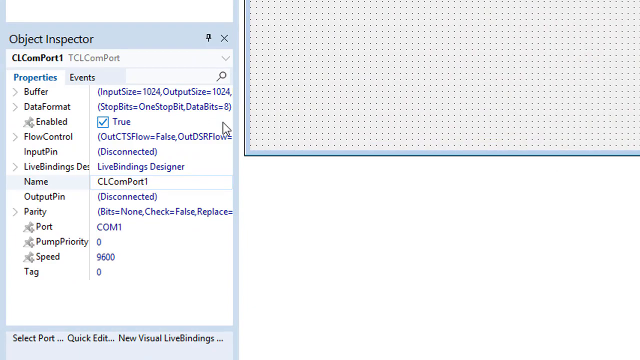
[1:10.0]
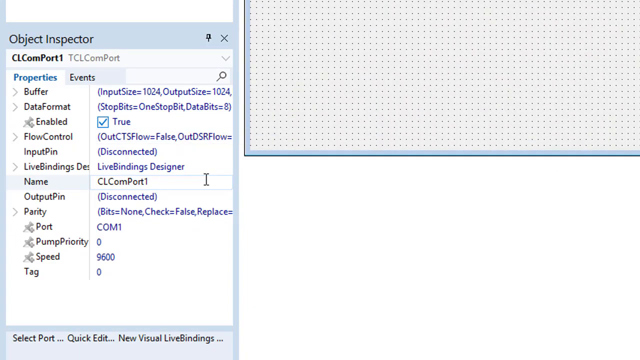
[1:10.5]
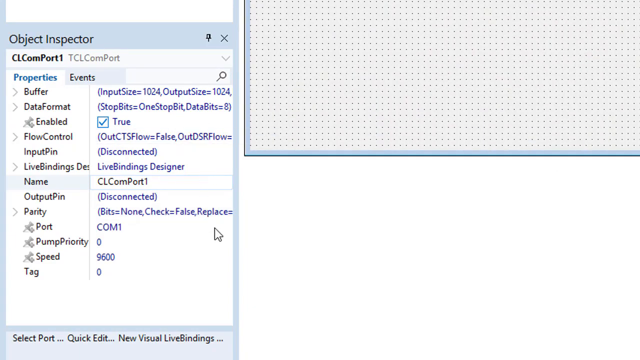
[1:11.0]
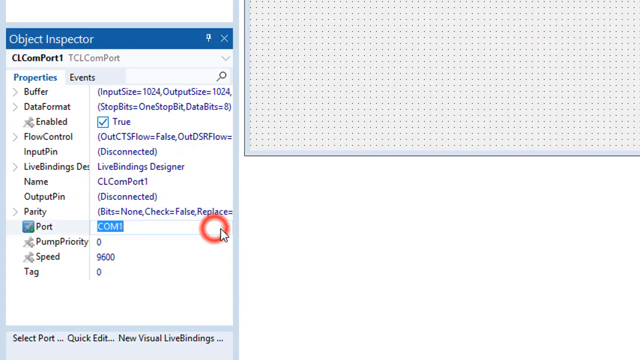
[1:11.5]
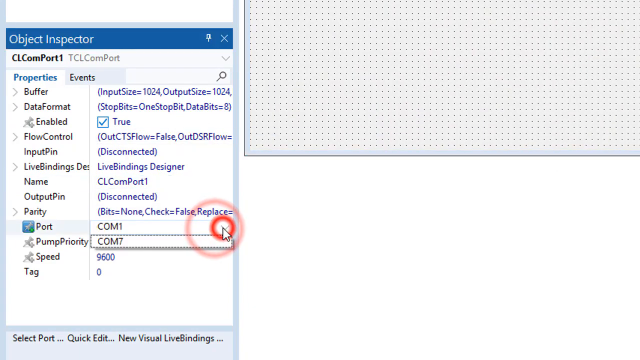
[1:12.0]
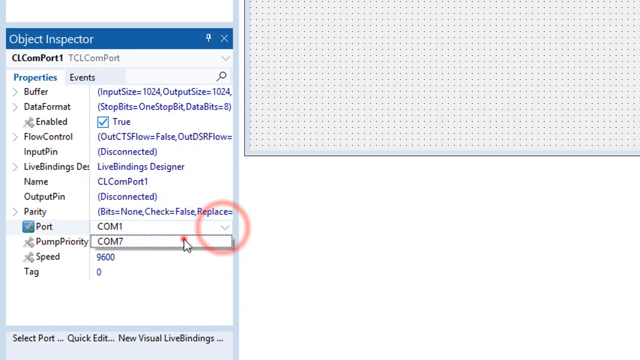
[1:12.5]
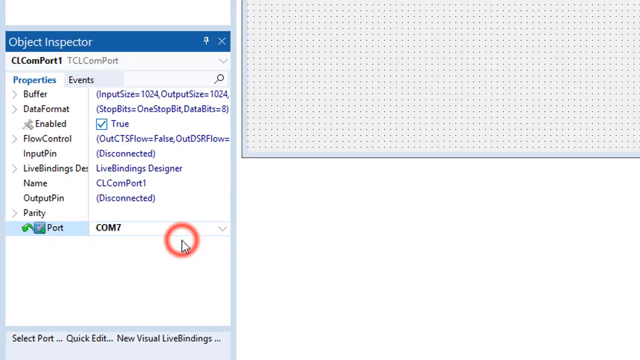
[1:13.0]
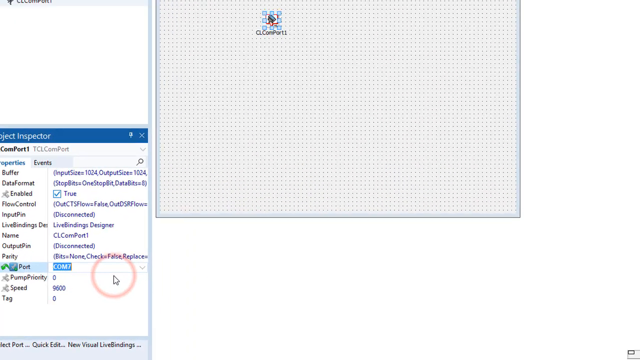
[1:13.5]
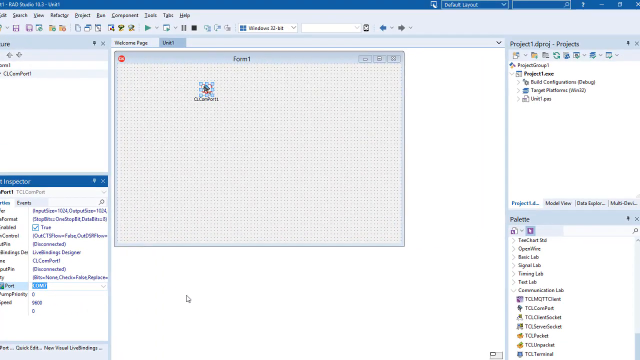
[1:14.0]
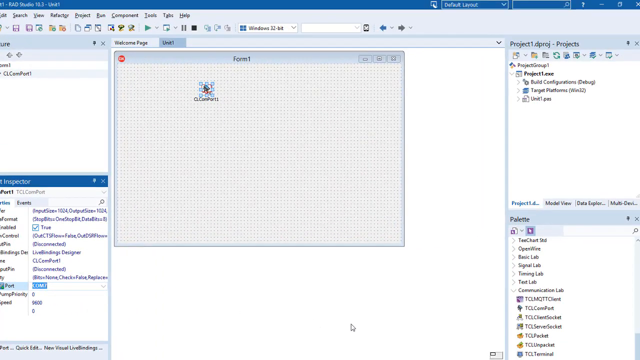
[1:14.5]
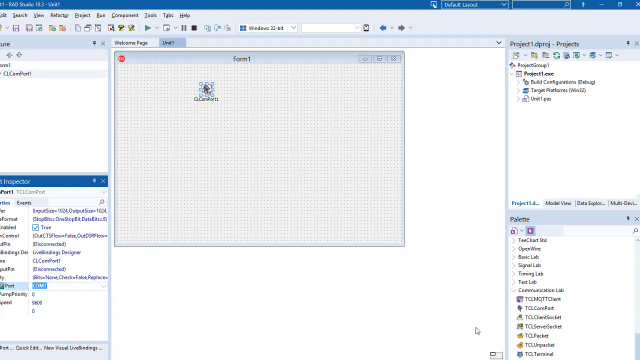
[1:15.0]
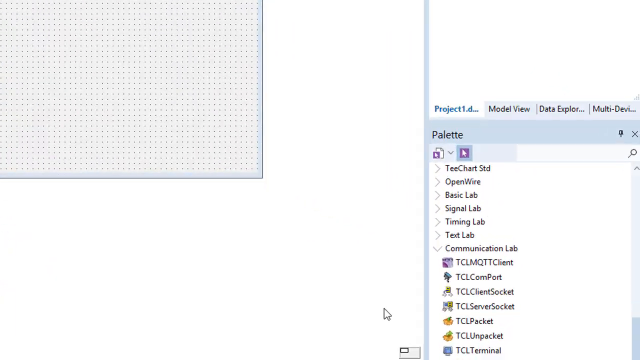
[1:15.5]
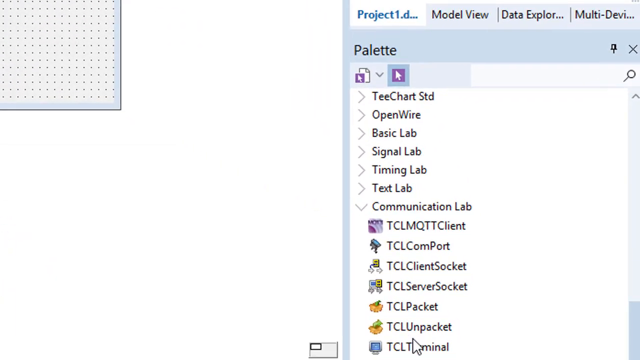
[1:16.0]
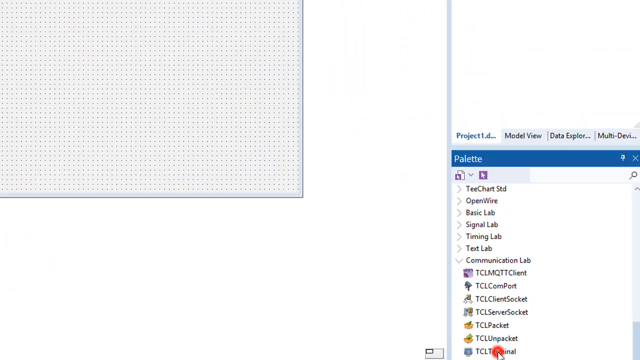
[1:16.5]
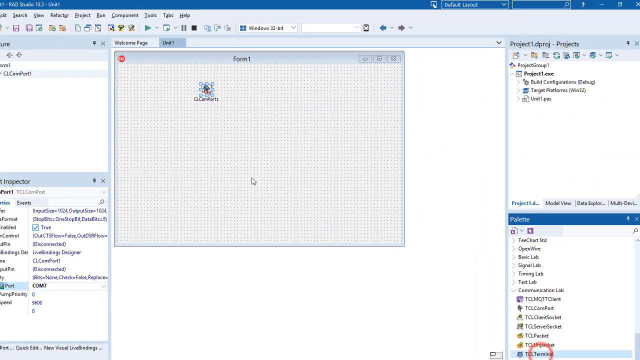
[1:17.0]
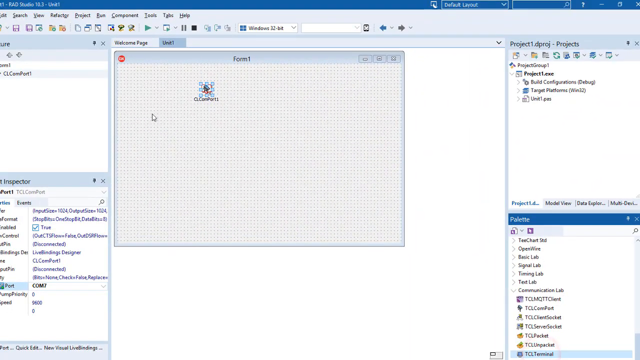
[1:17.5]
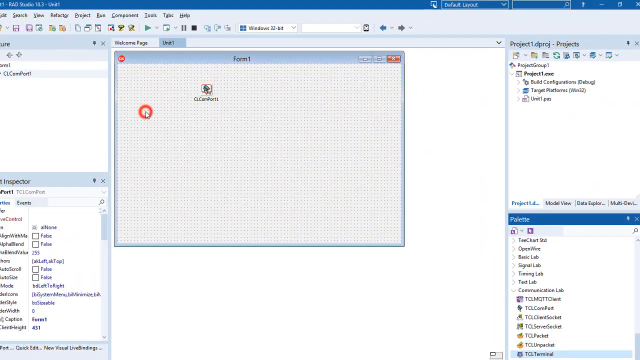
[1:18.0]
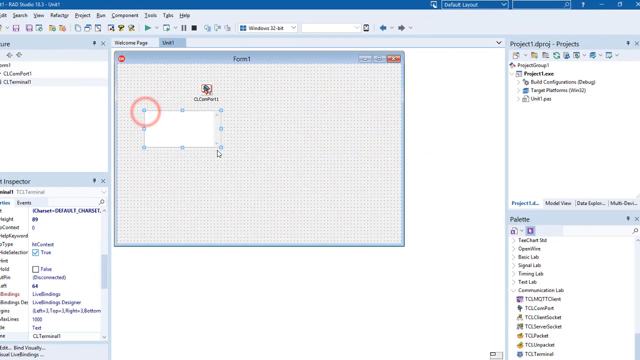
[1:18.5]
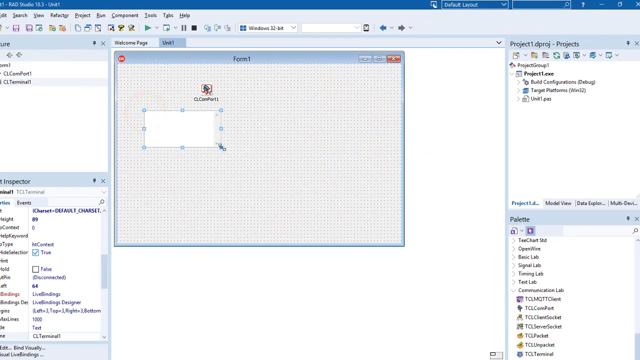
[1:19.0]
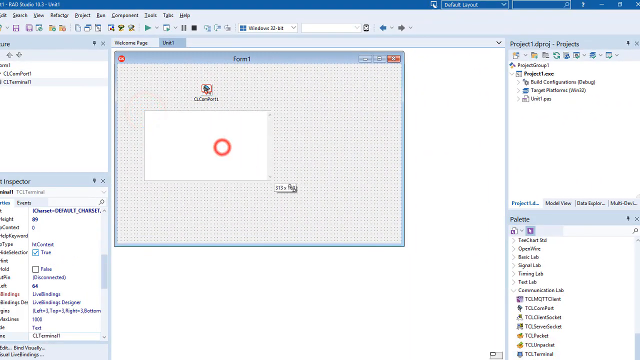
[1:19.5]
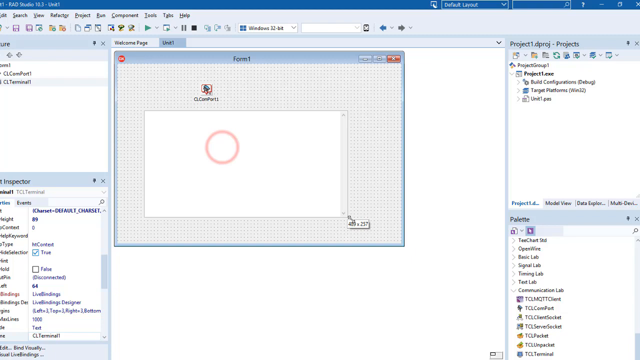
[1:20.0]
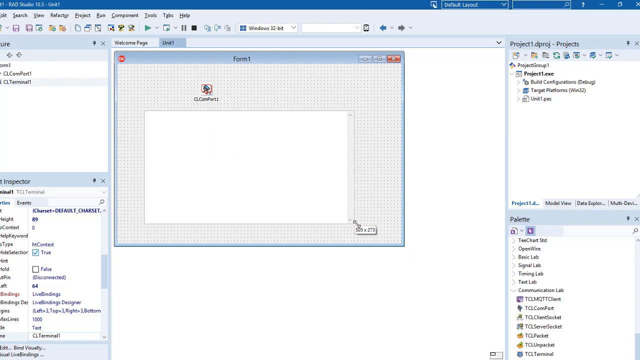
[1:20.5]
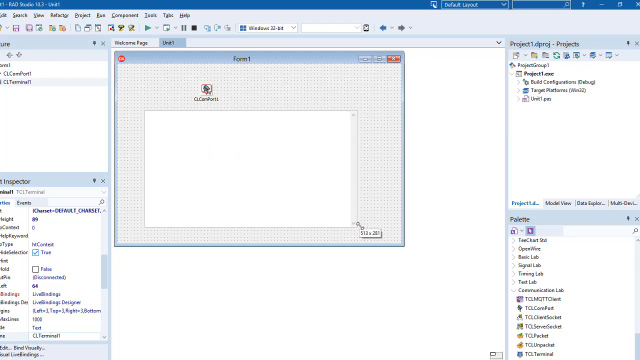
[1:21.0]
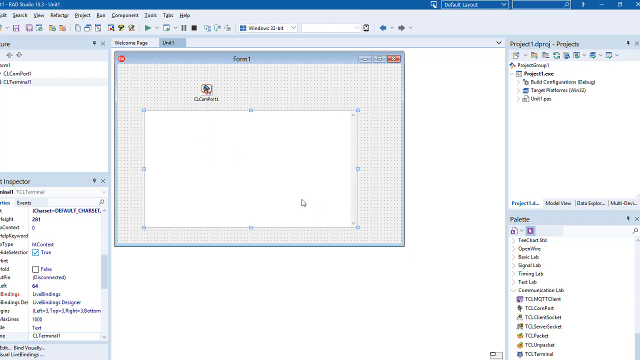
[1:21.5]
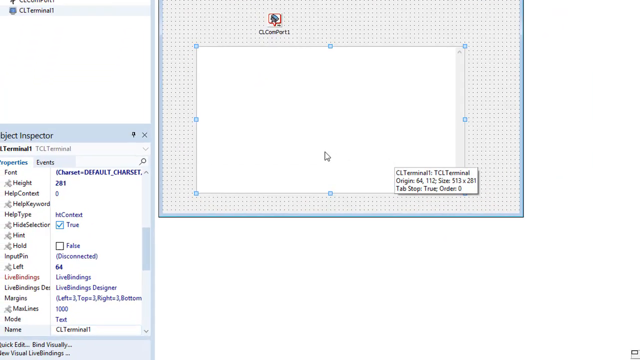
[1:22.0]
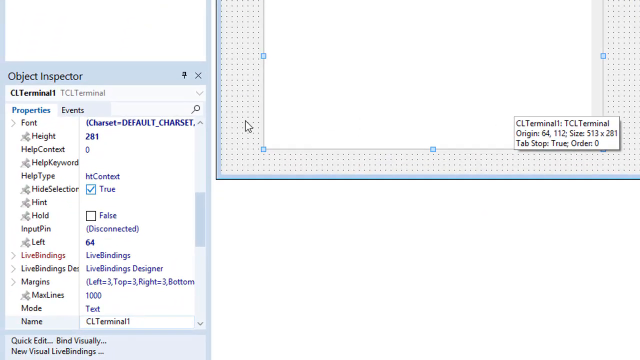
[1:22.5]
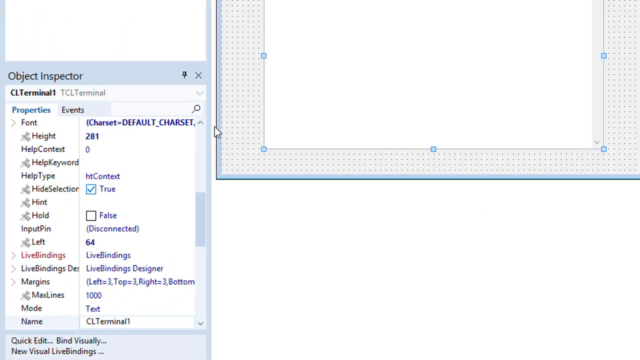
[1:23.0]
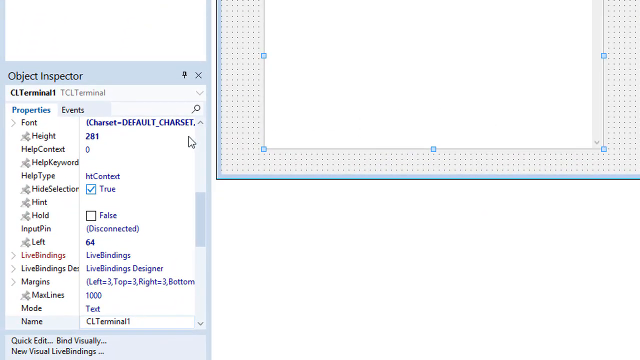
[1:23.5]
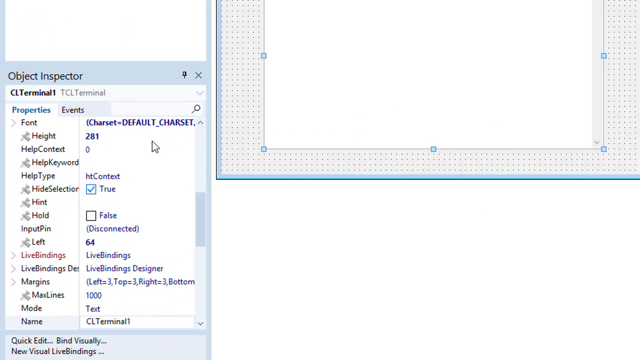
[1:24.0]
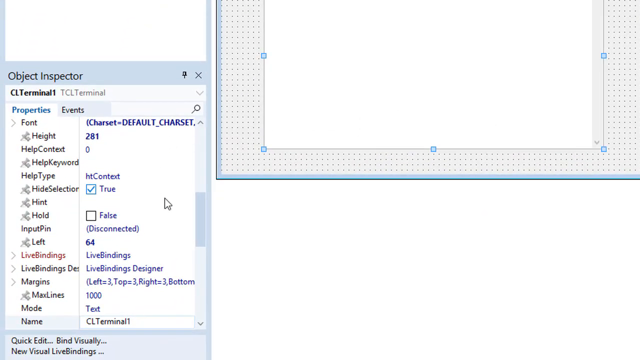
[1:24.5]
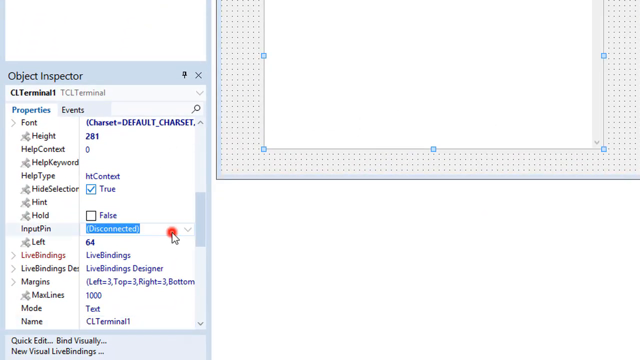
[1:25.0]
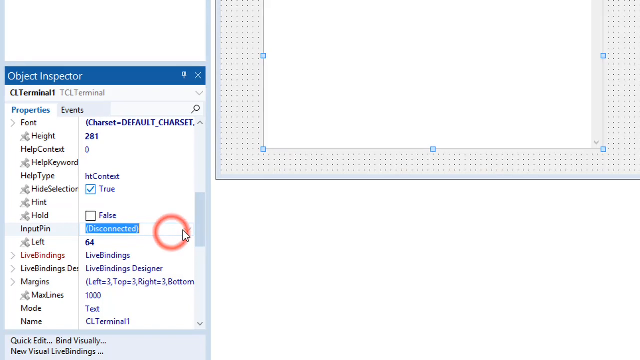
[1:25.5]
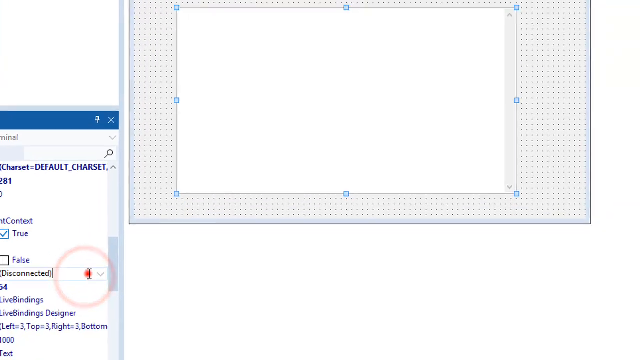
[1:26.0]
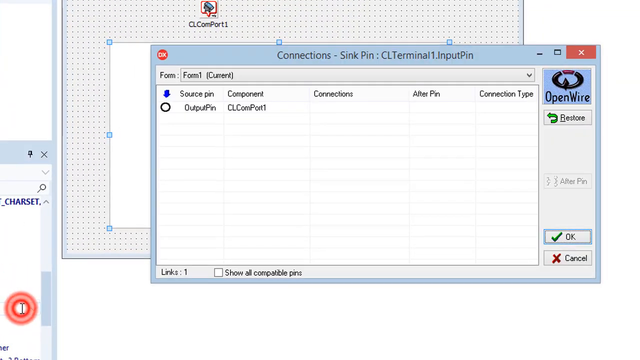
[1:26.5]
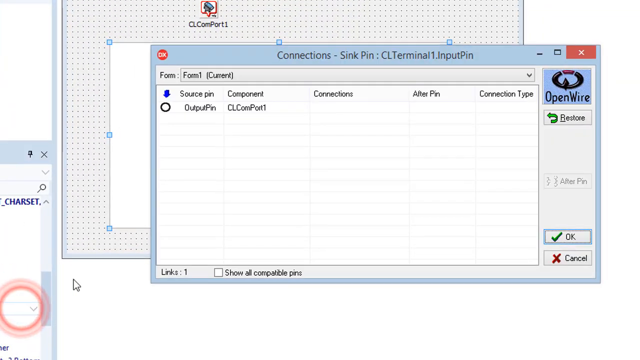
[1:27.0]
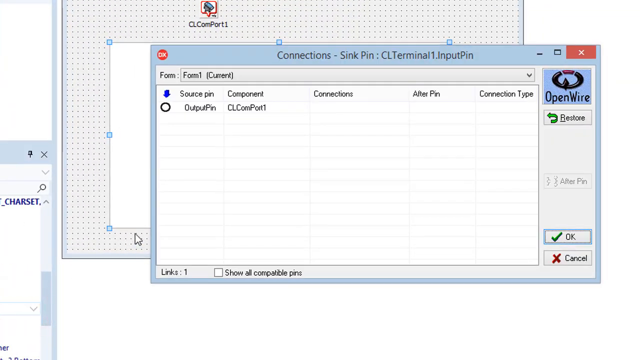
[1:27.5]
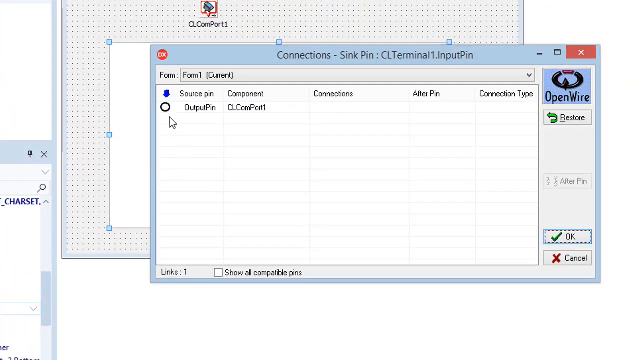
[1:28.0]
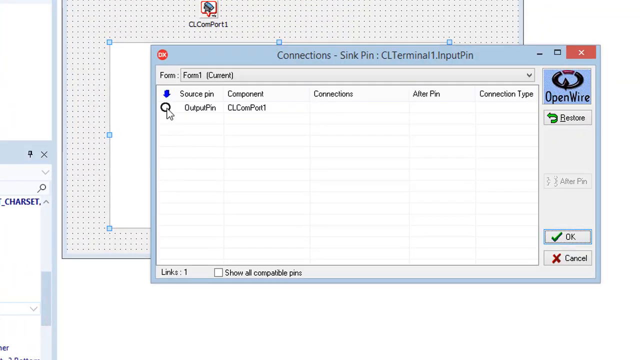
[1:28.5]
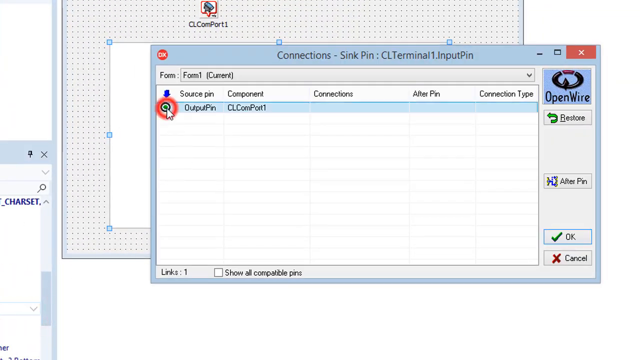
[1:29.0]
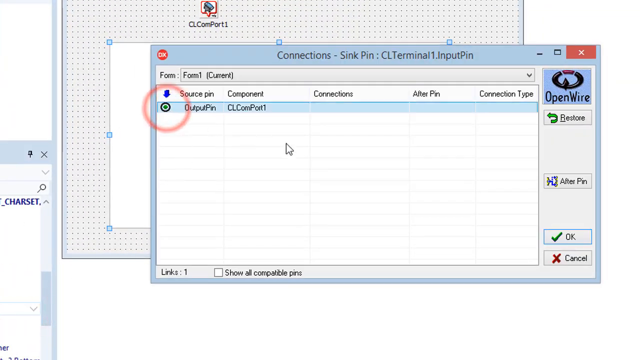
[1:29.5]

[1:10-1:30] When the view is zoomed in, a bunch of words is visible. The user is on the properties button, then on port, and clicks on COM1 and COM7, with COM1 in the middle. They highlight the right side and the left side, click on palette, open a box and drag within it, then click on "disconnected". Another pop-up opens that says "output pin". Most of the video is zoomed out, where the words are unclear. It seems to be programming, but no recognizable programming language such as Java or Python is clear.